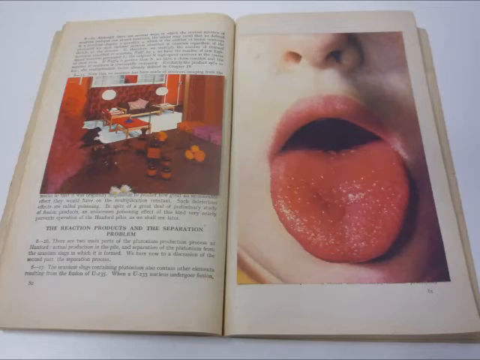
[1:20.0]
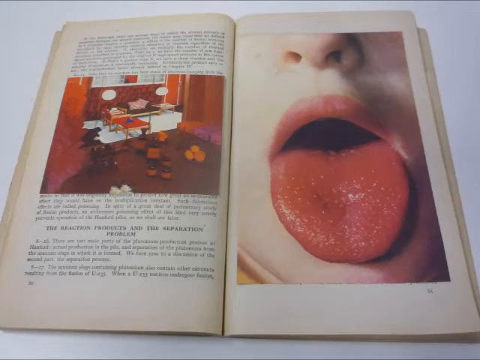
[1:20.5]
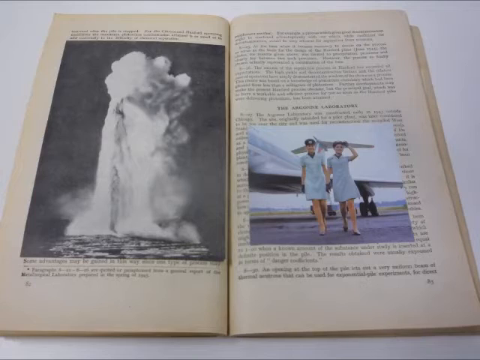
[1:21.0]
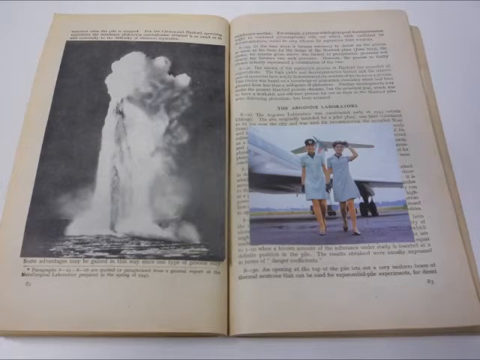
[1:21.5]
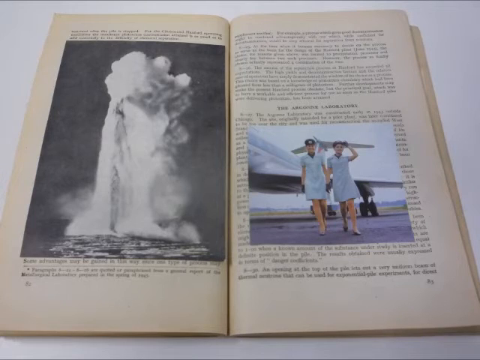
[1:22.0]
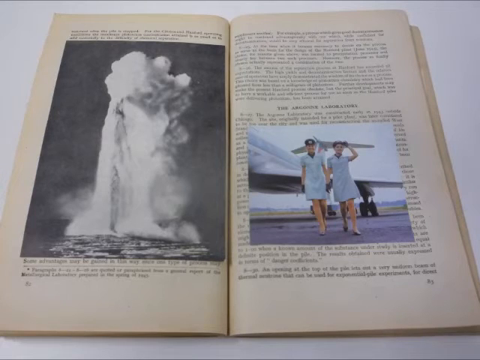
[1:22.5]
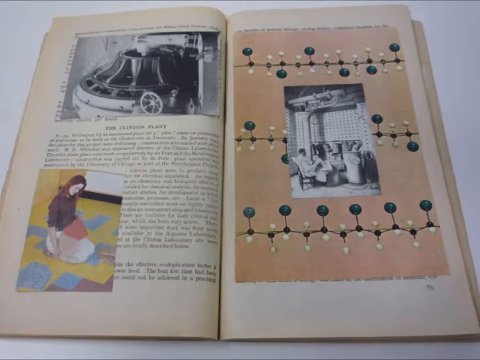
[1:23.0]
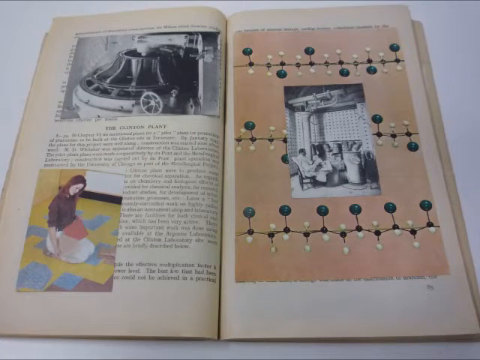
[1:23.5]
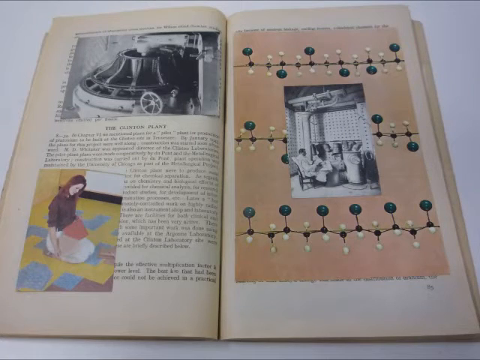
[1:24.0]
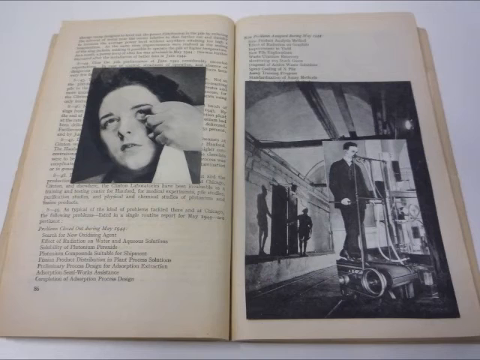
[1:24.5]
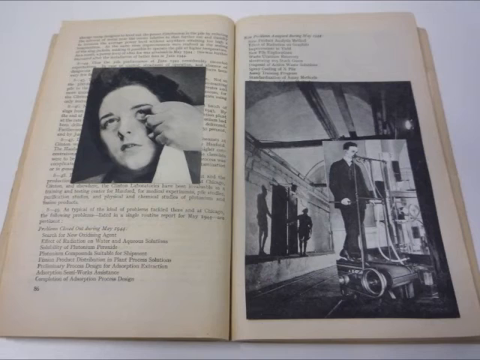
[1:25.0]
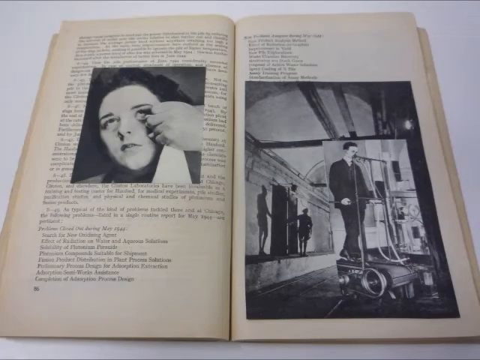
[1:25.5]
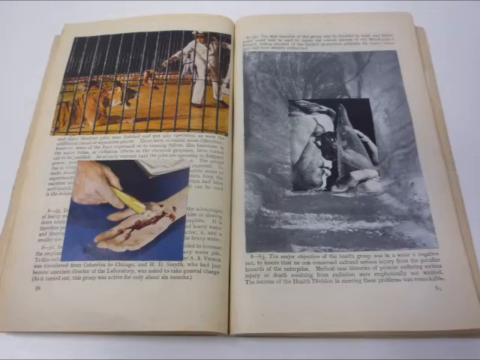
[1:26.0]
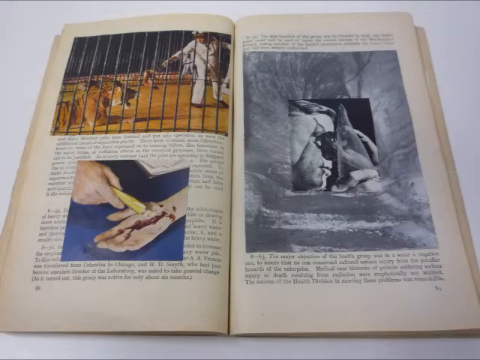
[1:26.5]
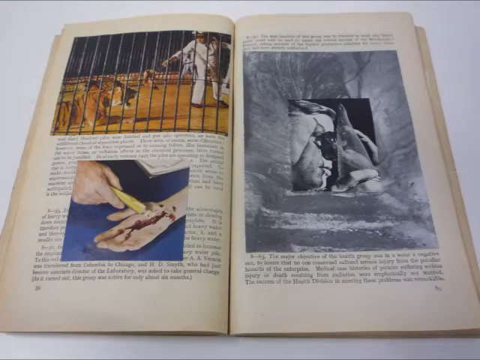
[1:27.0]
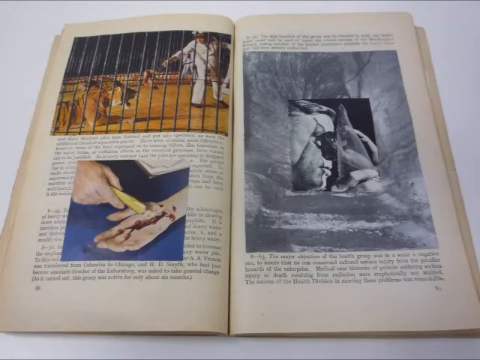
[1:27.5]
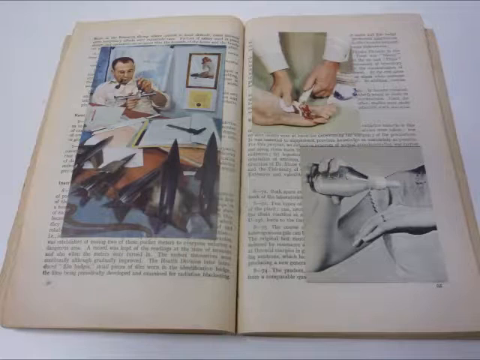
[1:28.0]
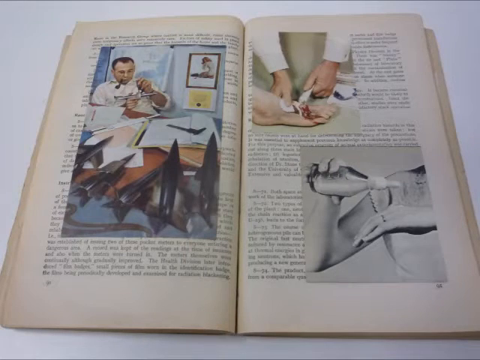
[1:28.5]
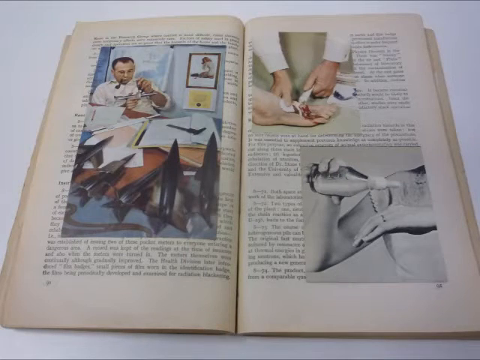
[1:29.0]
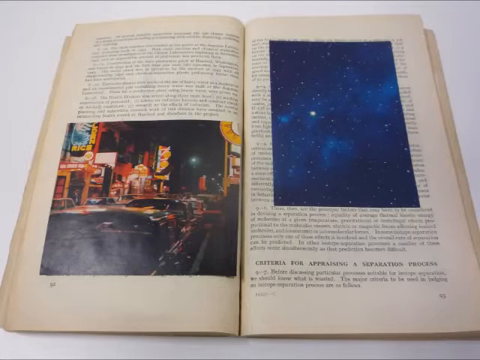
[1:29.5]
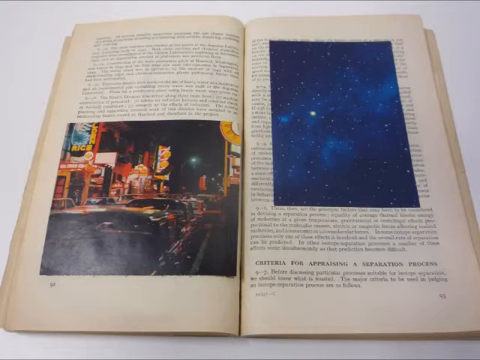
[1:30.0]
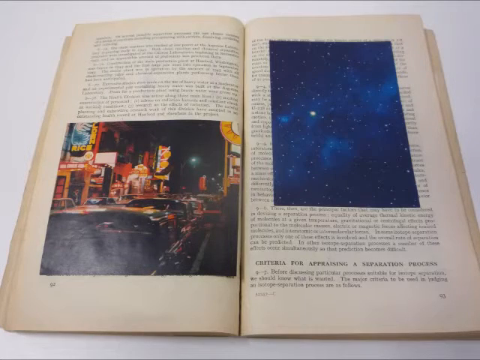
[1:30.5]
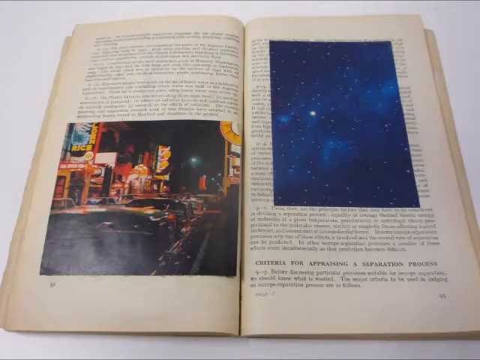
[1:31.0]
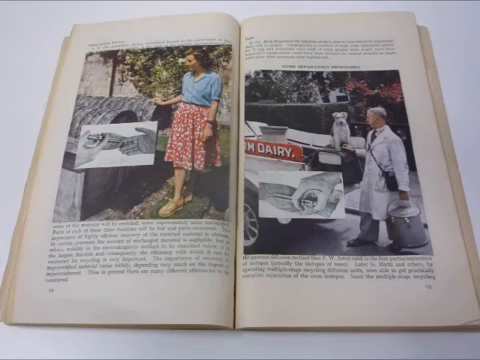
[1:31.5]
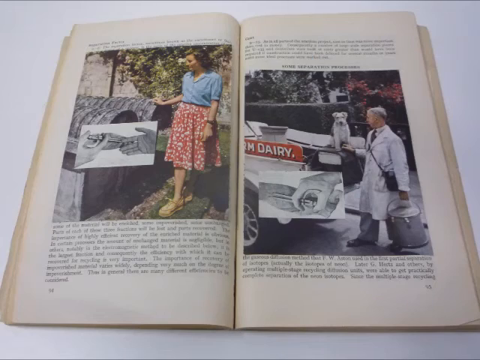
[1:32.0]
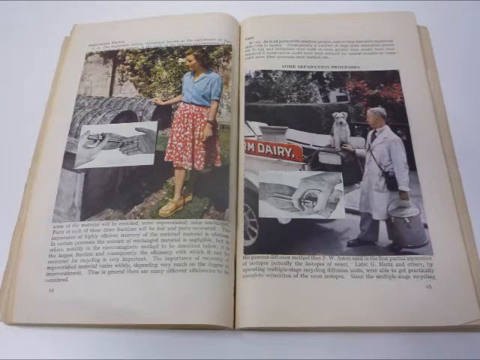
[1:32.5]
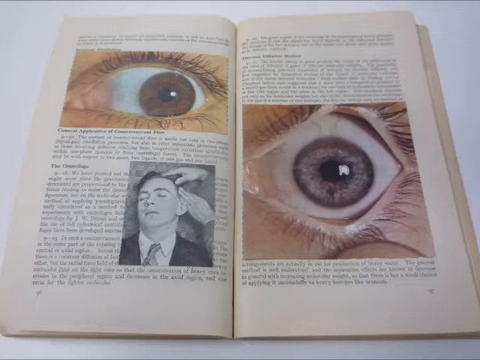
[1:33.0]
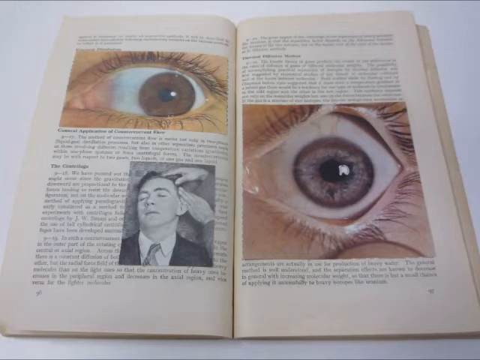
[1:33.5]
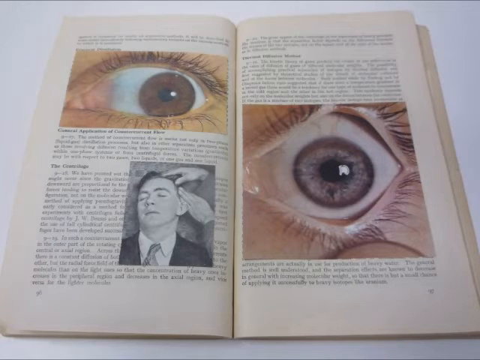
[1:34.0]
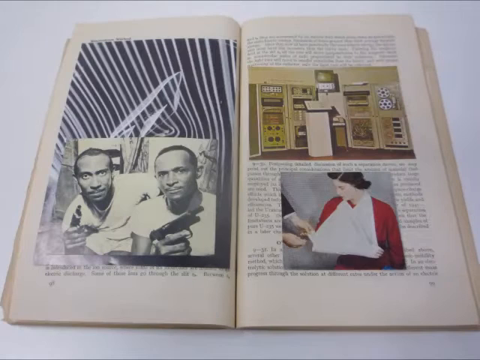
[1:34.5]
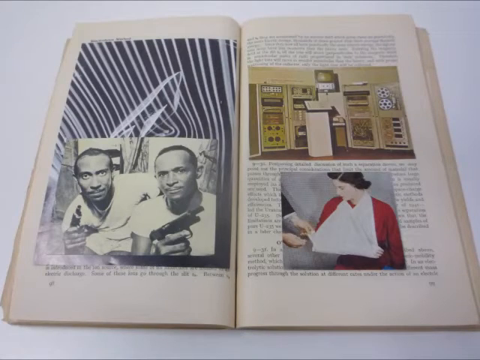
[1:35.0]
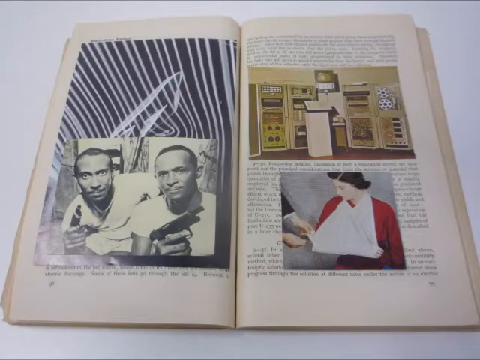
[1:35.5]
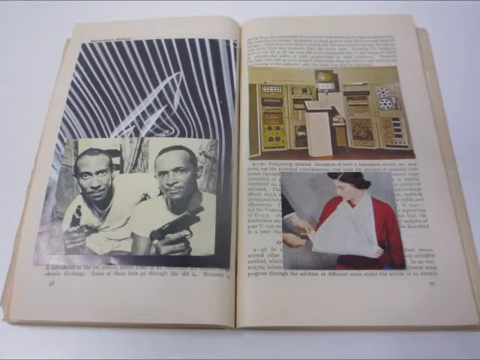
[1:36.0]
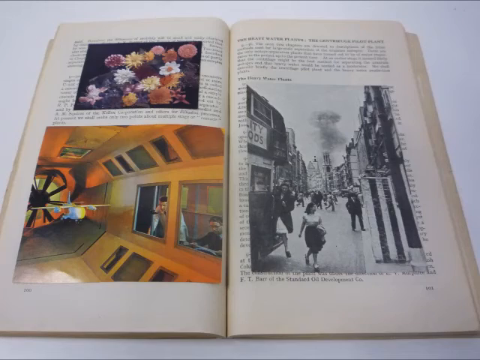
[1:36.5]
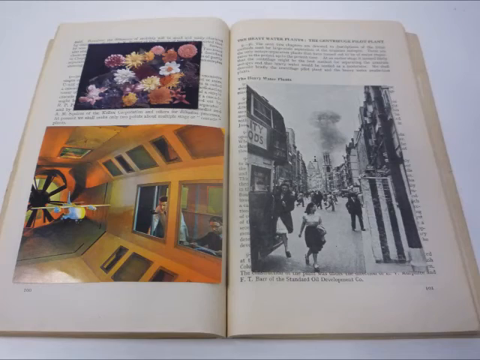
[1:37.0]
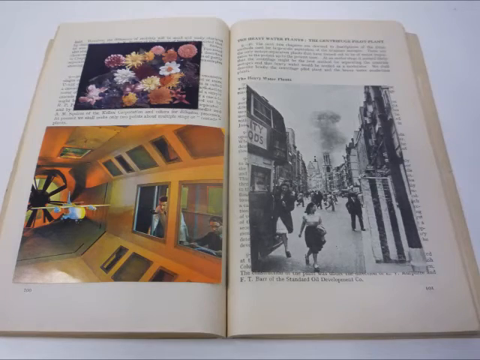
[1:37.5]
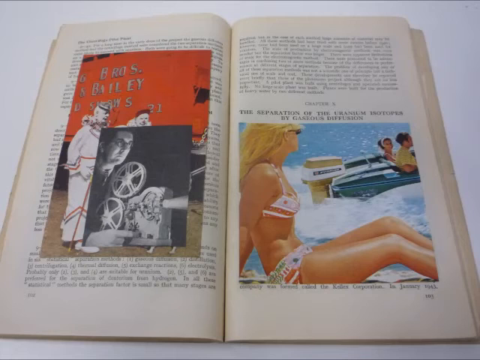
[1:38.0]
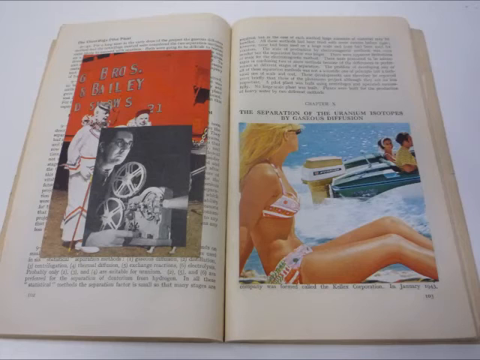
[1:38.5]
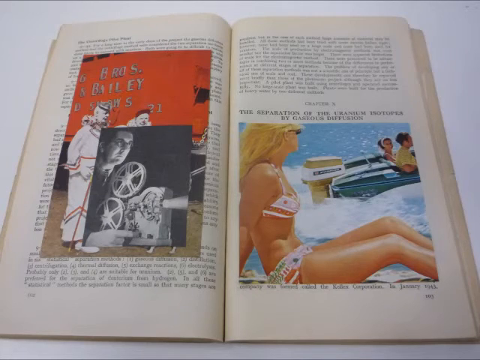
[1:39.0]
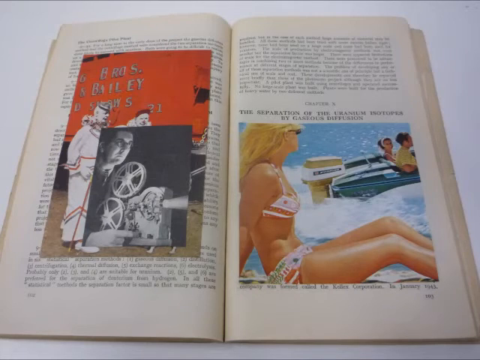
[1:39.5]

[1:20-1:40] The inside of the leaflet, originally printed in 1945, shows yellowing paper with text about nuclear energy. Many loose photographs of random things have been inserted, and they don't all seem to be from the same time period. There is a black and white image of somebody doing something to a lady's eye, a man dealing with a tiger in a cage, somebody dealing with what looks like blood on somebody's foot, the night sky, and a colour photograph of traffic at night. The photographs have no apparent theme, but all look historical, spanning quite a wide period of time; some are colour and some black and white.